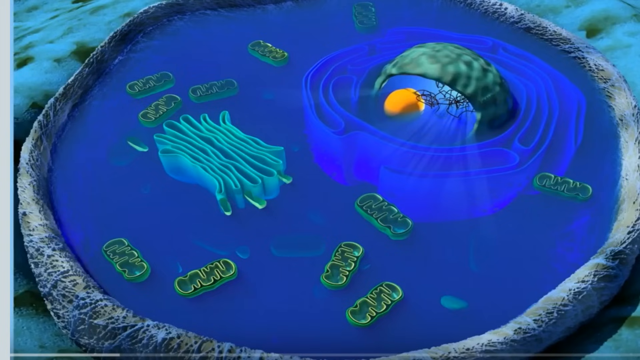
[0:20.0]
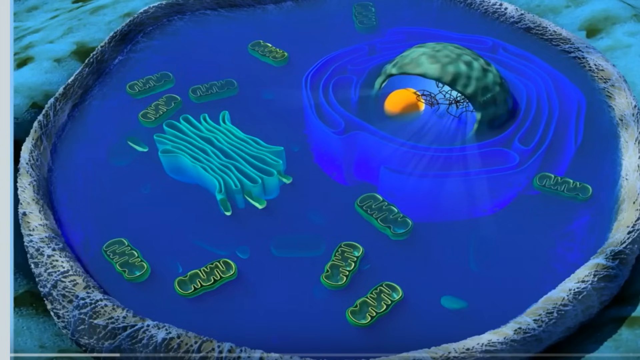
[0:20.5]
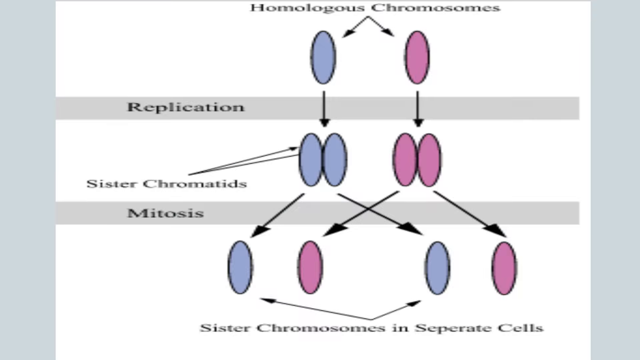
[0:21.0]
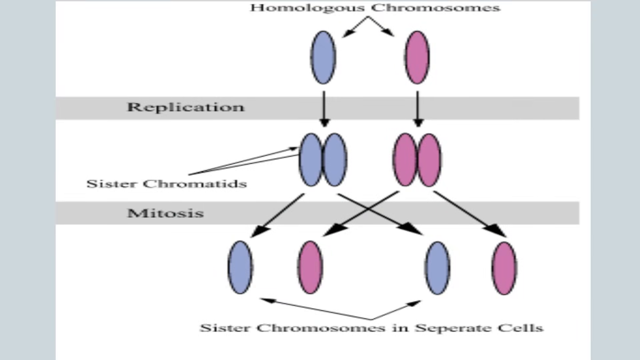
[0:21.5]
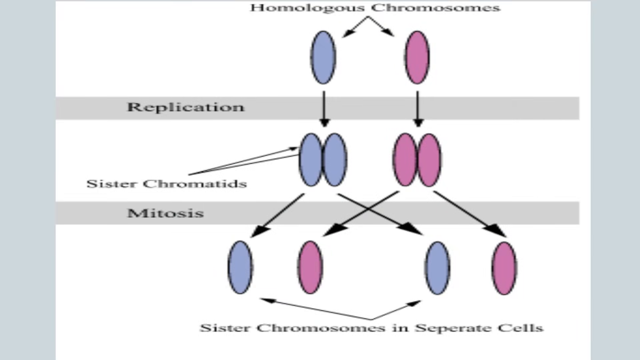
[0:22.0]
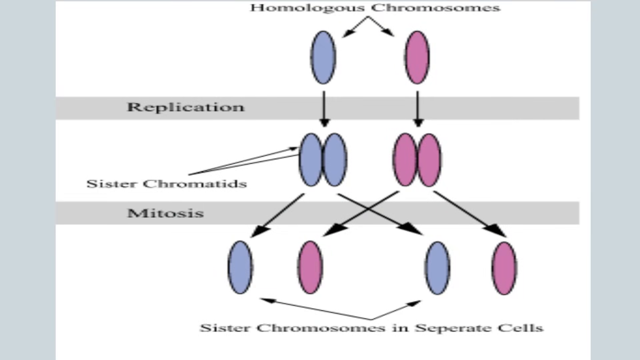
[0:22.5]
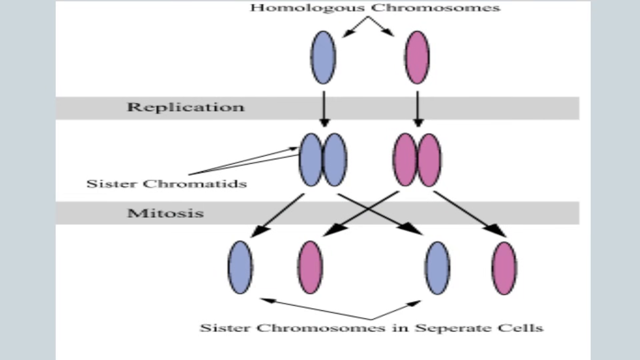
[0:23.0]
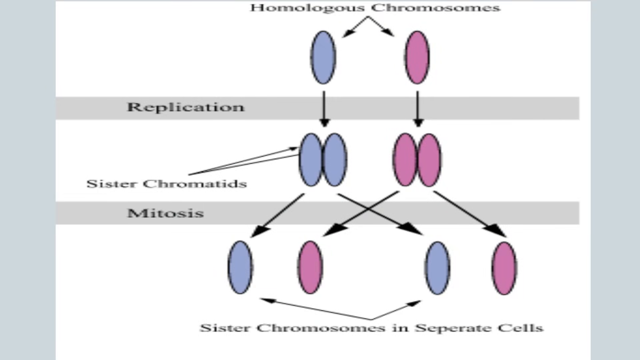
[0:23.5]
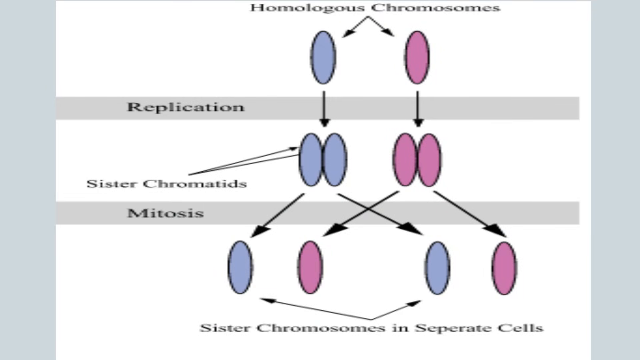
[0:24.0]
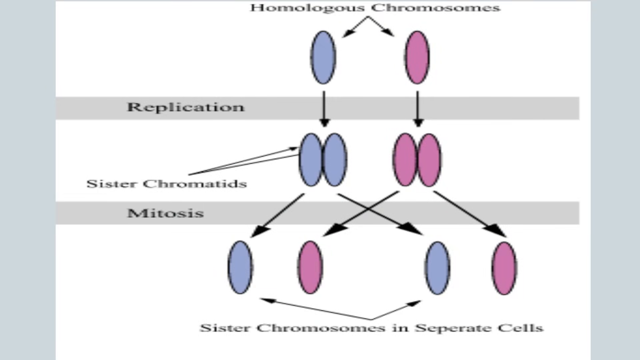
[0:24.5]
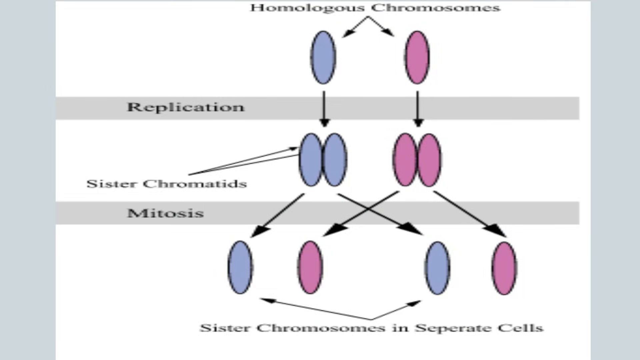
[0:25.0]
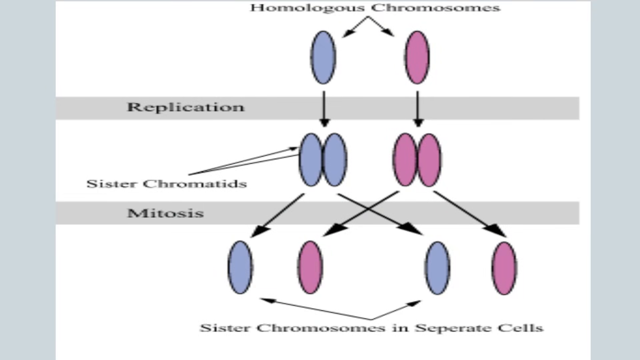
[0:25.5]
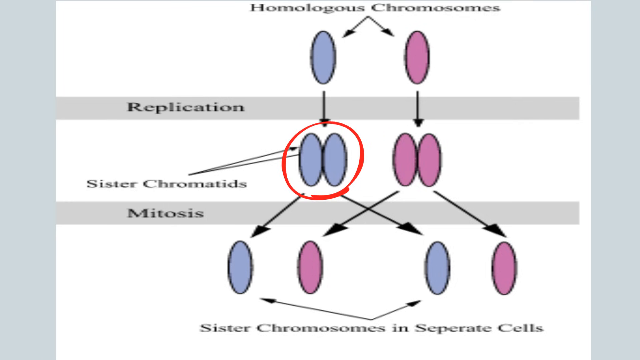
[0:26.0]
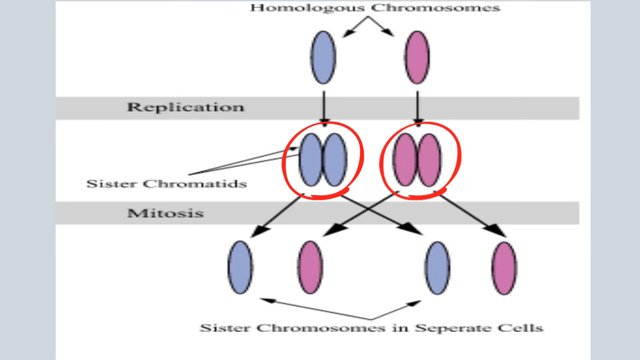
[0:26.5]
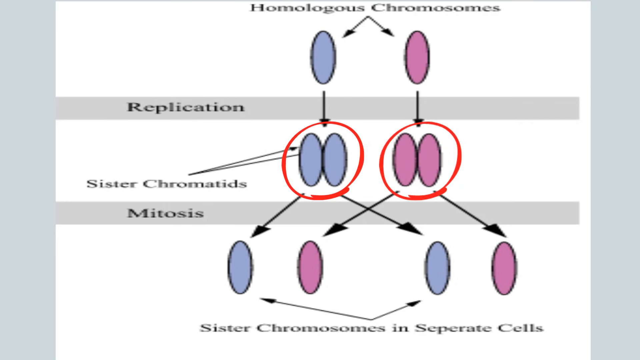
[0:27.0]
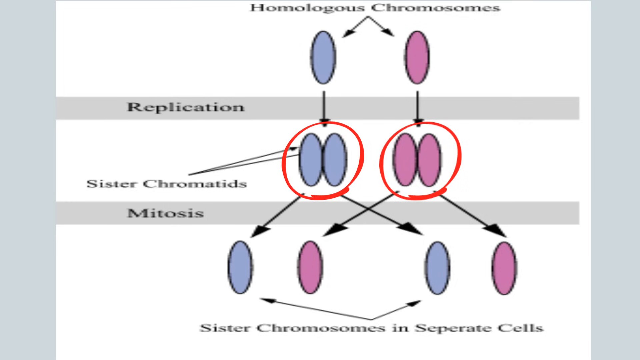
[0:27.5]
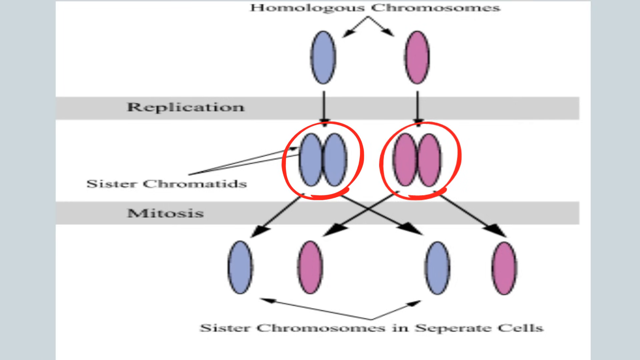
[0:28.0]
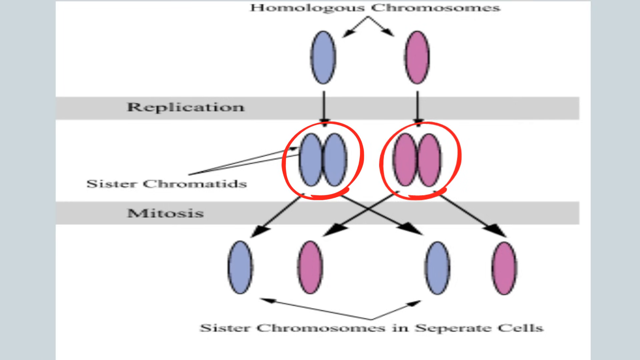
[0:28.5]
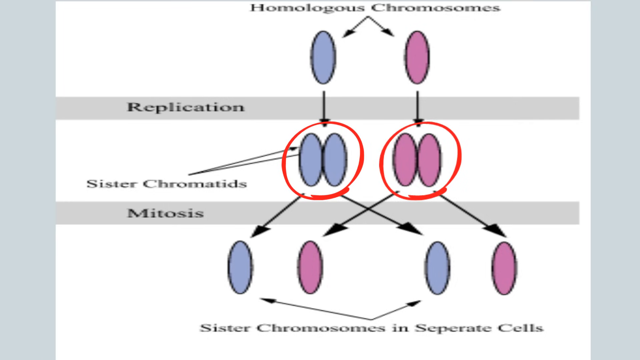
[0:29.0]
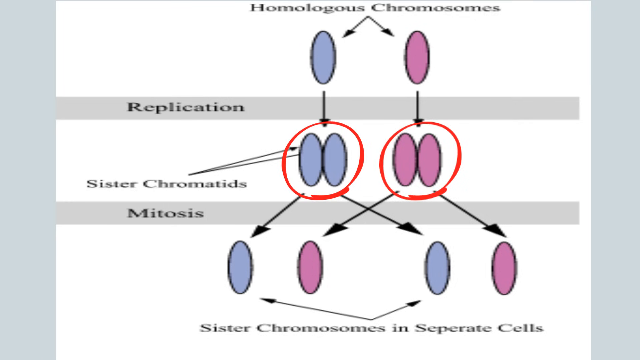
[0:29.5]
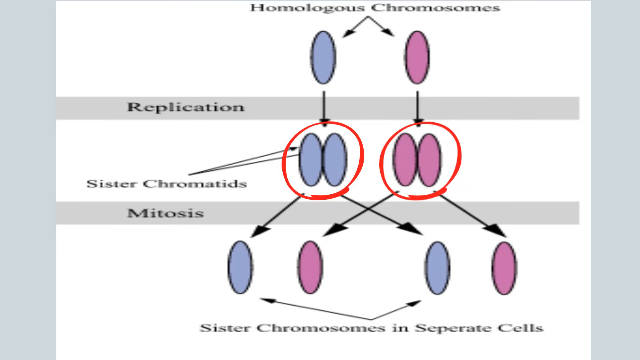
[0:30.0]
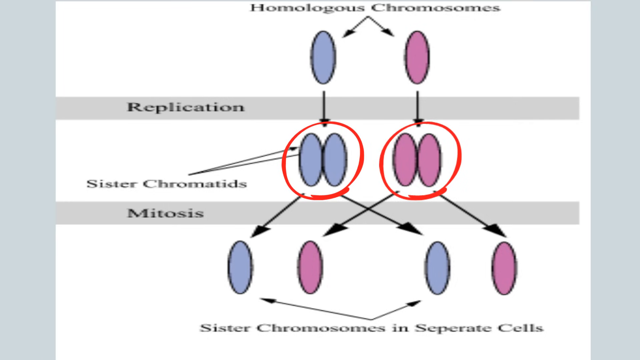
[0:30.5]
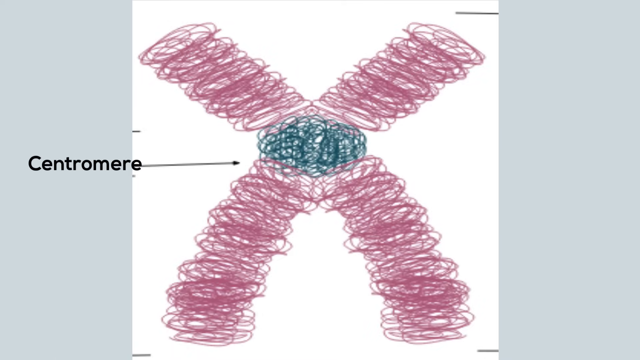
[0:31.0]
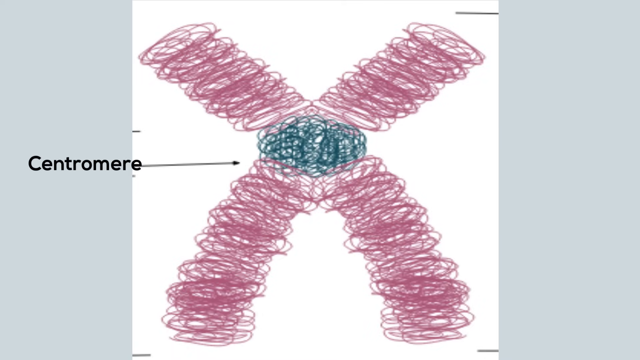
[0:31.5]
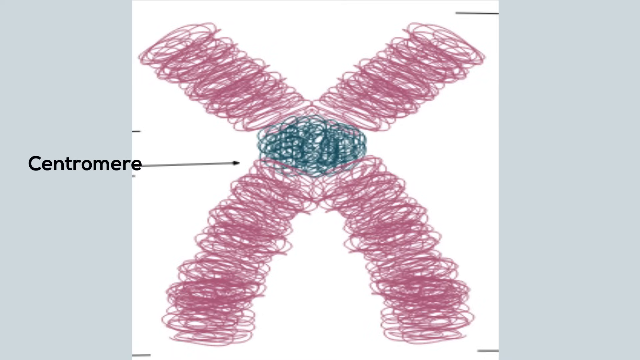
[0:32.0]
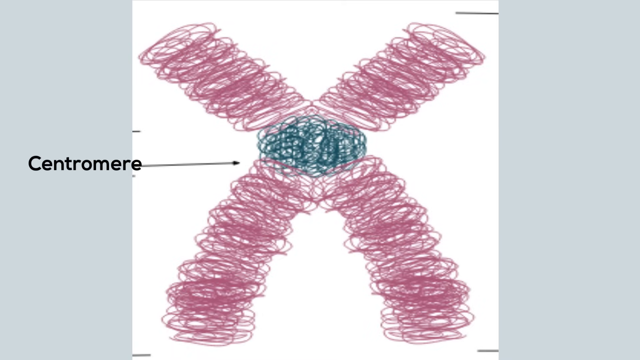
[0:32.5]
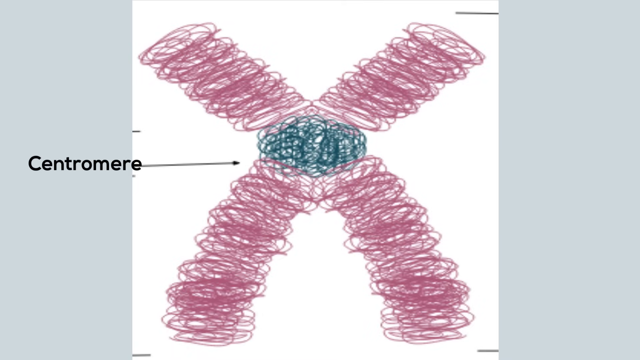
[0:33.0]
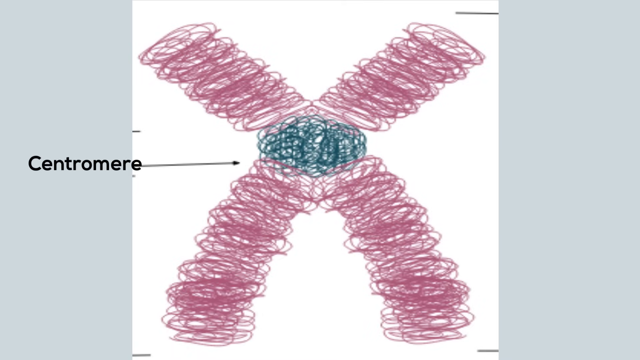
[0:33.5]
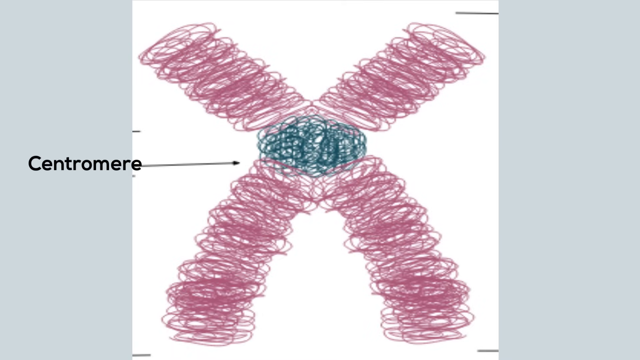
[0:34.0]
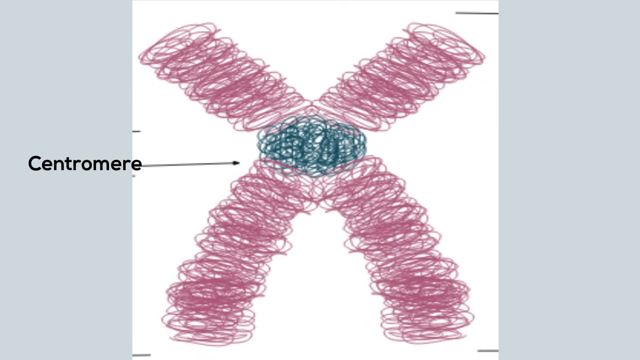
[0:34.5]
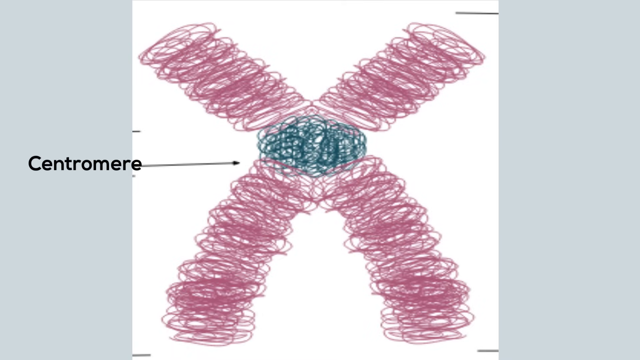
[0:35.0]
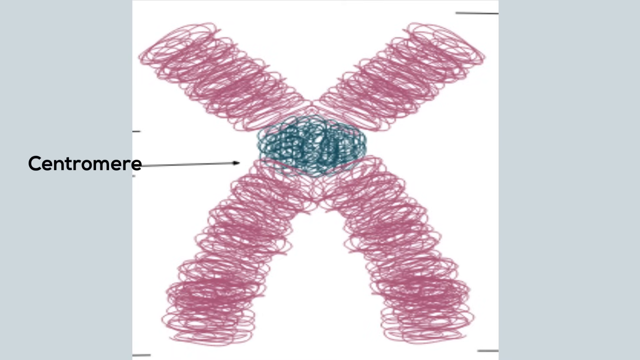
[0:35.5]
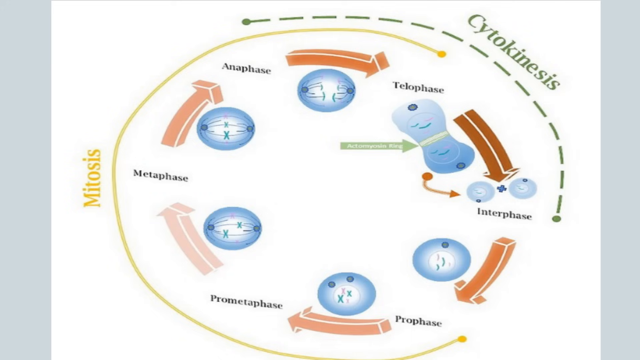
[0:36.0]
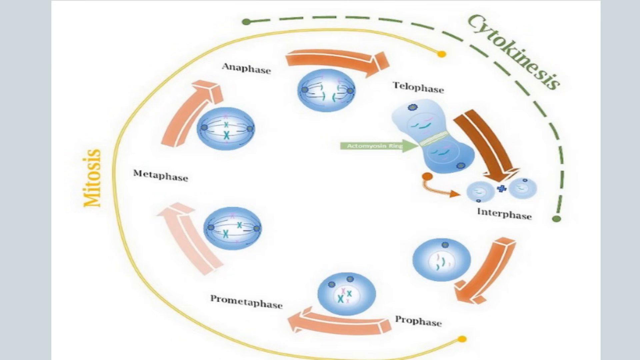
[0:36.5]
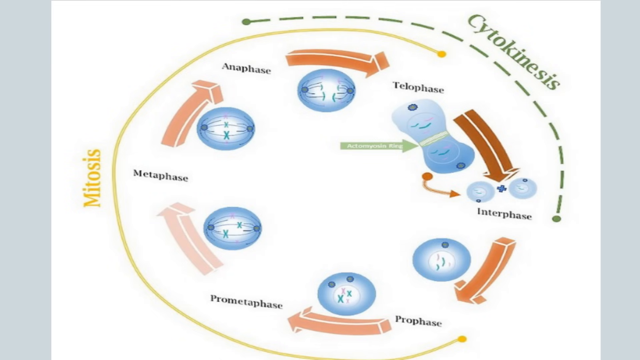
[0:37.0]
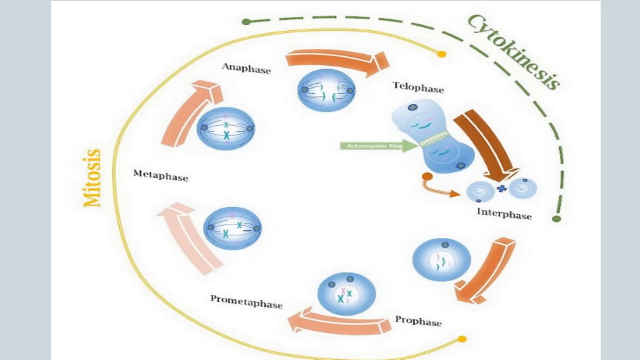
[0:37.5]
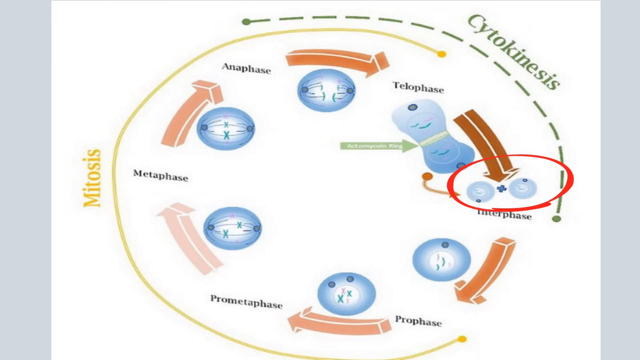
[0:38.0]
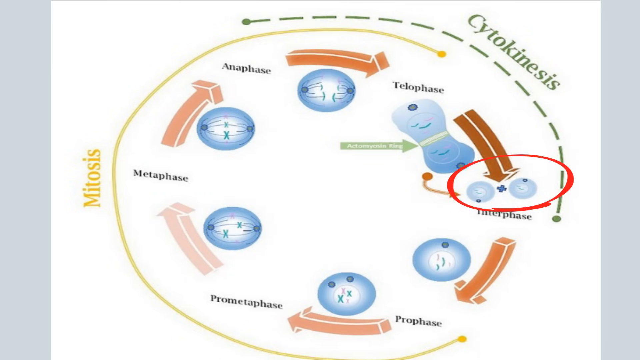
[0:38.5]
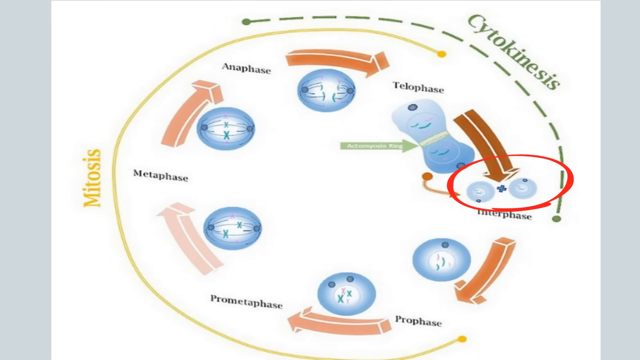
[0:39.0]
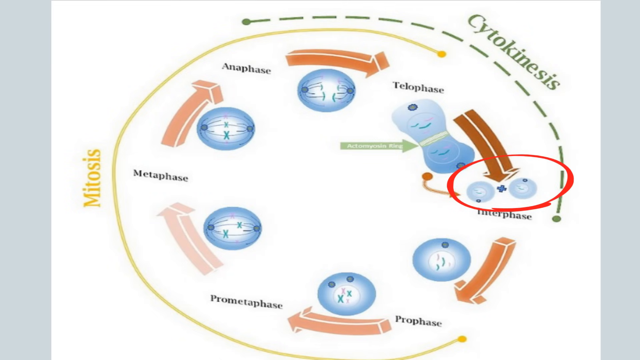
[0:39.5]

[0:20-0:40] A flow diagram appears with the title "homologous chromosomes" at the top. The diagram points to the left and right in light blue and a pinkish purple. It shows replication first, after which the chromosomes become sister chromatids, going from two to four: two blue and two pinkish purple. Next comes mitosis, where they are split and distributed evenly by color, with one blue and one pinkish purple on the right and one blue and one pinkish purple on the left. The end of the process shows sister chromosomes in separate cells, highlighted in red. A shot of a central mirror X follows, and then cytokinesis. A circular diagram then goes through the different phases, such as anaphase and telophase, some of which are hard to read, and mitosis, showing it as a cyclical process.